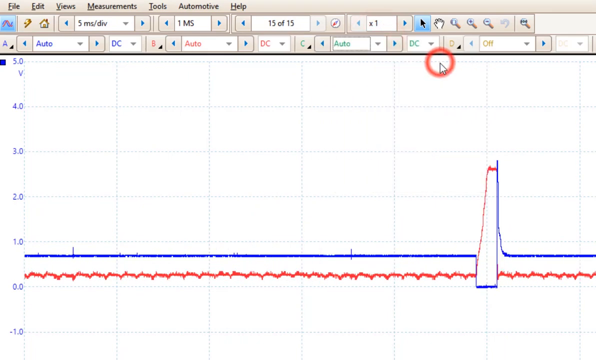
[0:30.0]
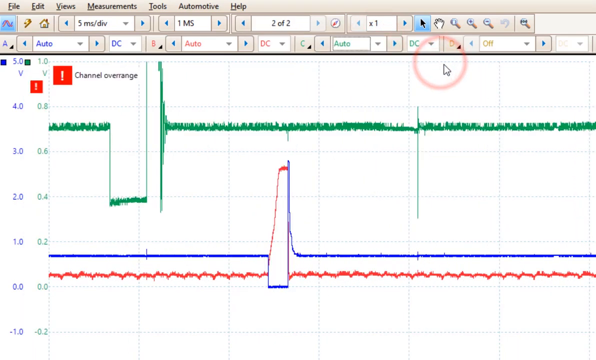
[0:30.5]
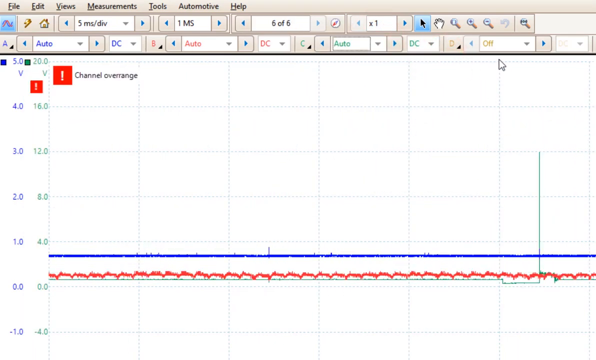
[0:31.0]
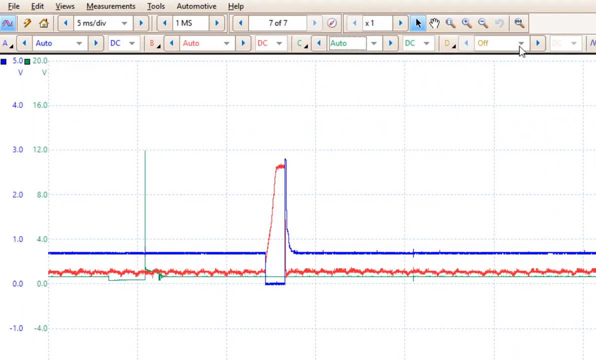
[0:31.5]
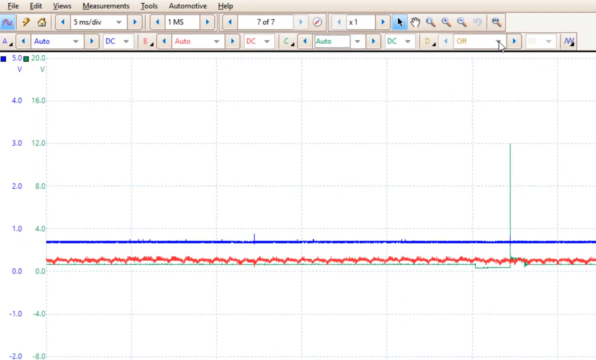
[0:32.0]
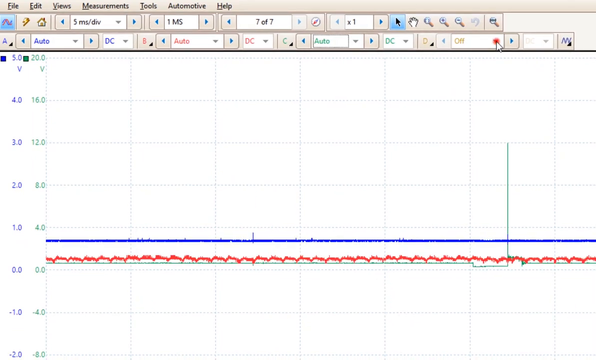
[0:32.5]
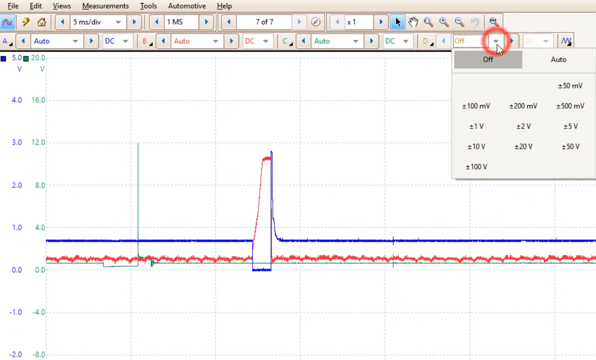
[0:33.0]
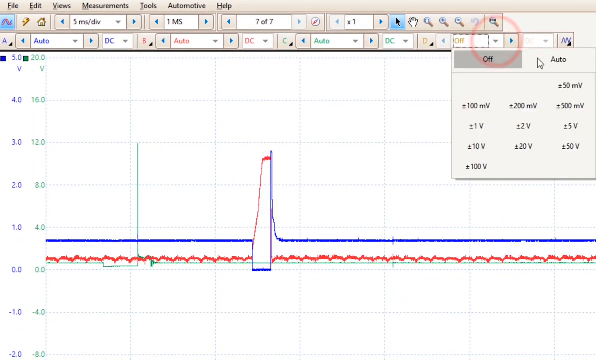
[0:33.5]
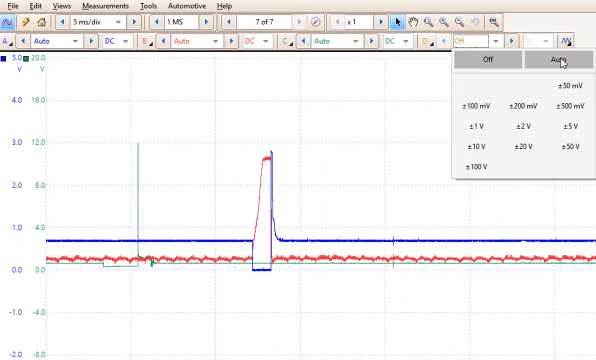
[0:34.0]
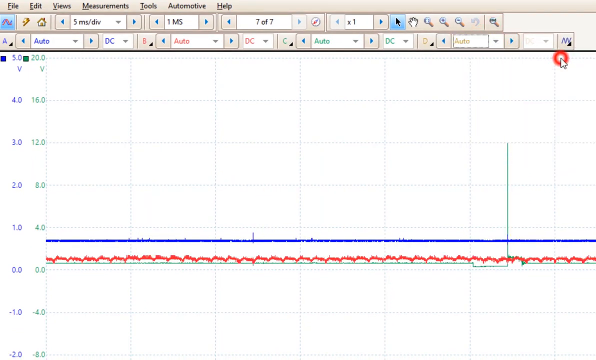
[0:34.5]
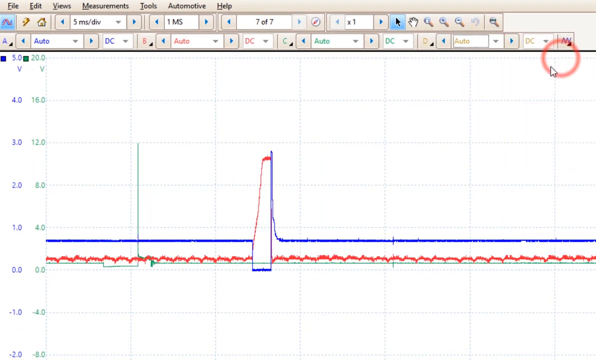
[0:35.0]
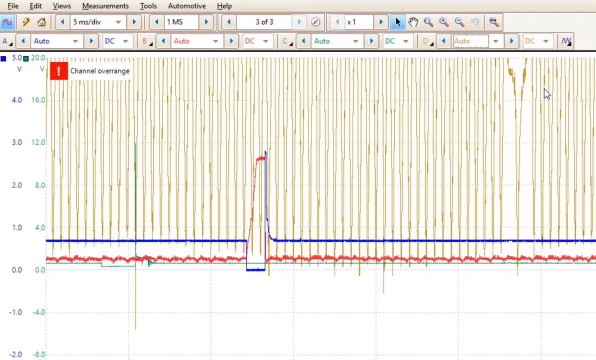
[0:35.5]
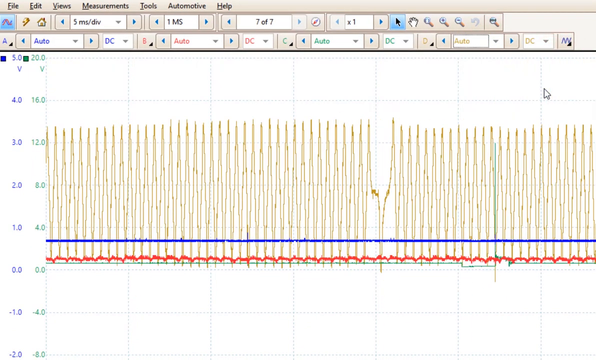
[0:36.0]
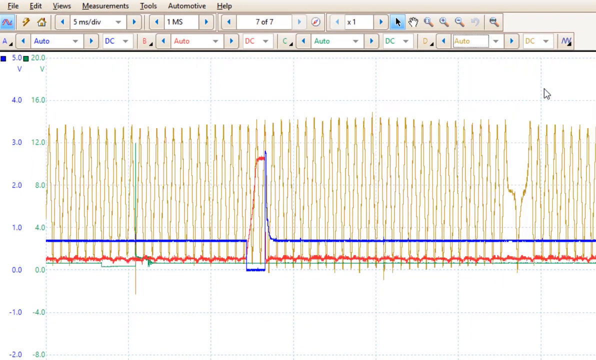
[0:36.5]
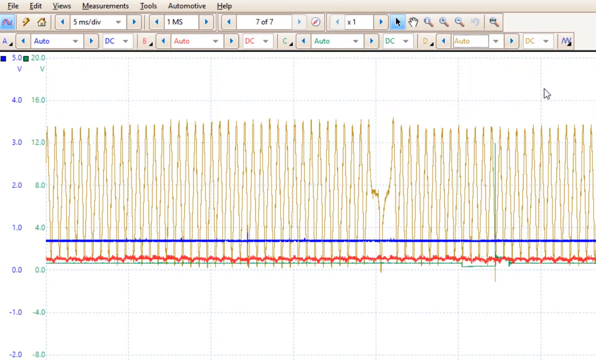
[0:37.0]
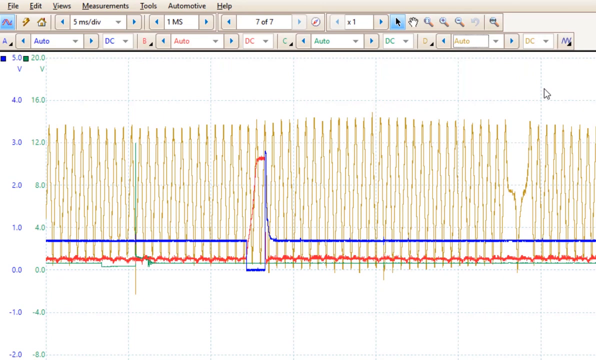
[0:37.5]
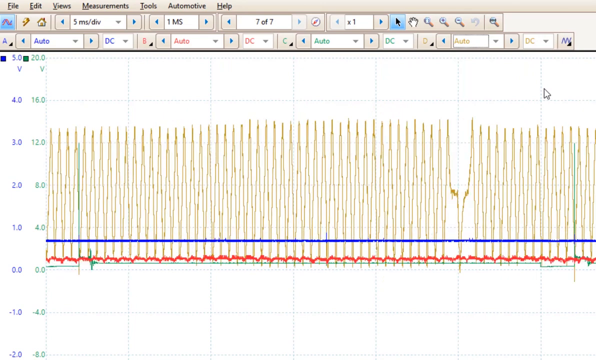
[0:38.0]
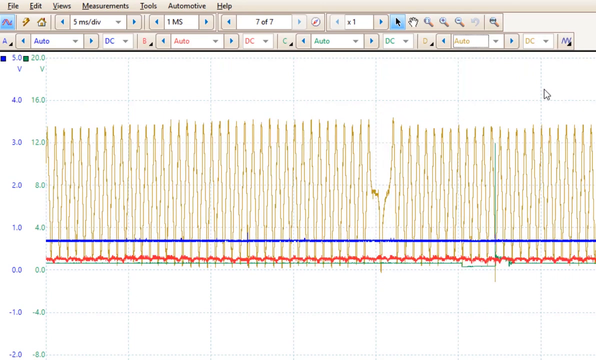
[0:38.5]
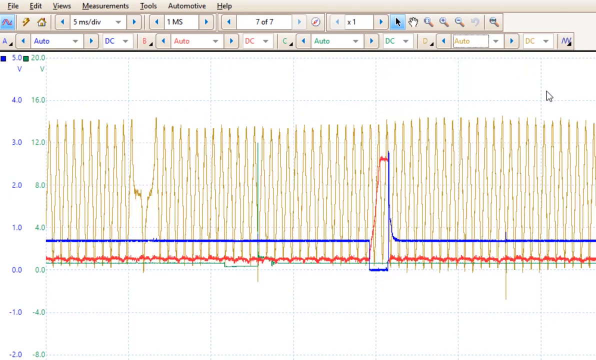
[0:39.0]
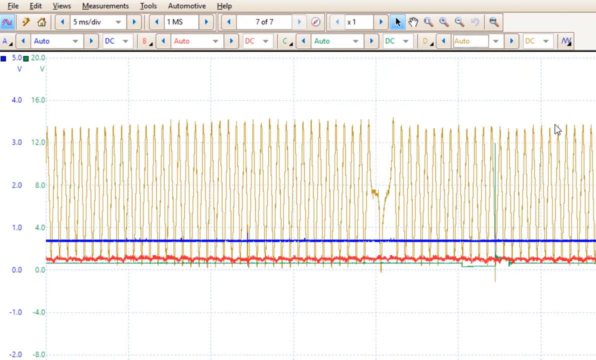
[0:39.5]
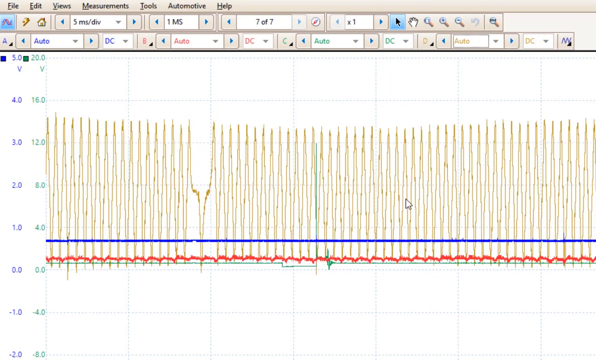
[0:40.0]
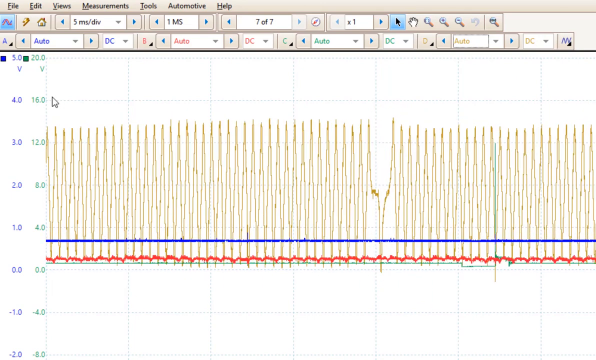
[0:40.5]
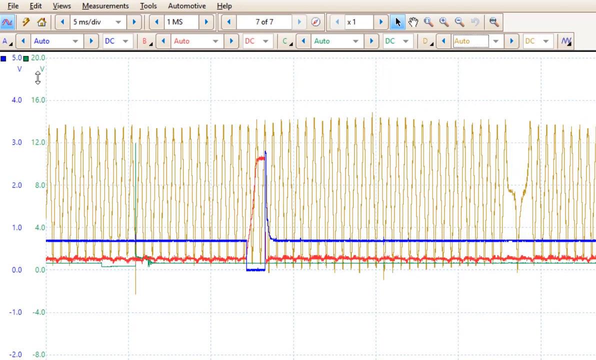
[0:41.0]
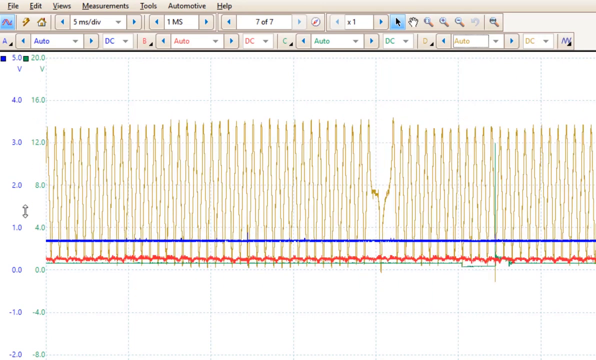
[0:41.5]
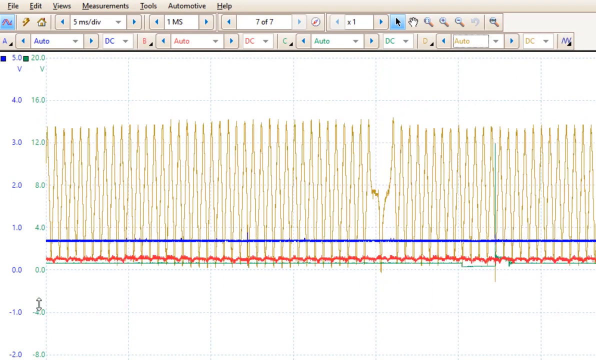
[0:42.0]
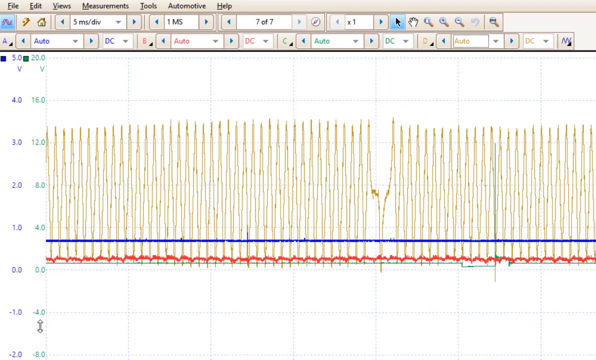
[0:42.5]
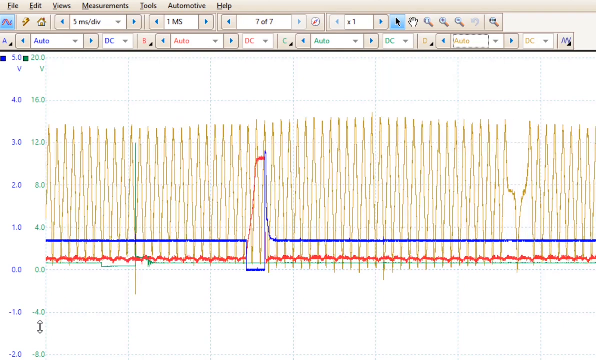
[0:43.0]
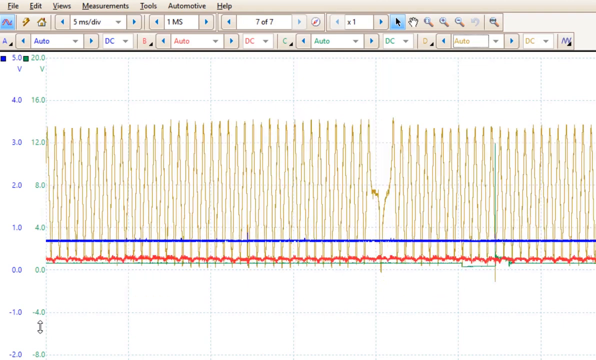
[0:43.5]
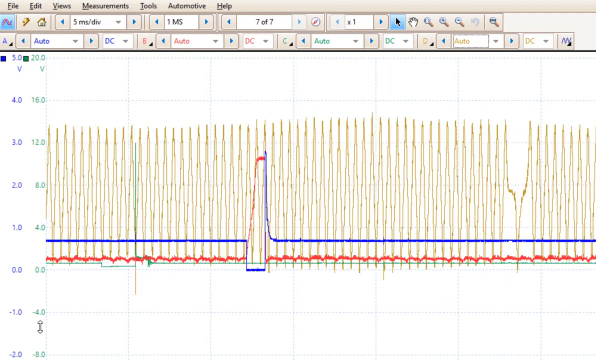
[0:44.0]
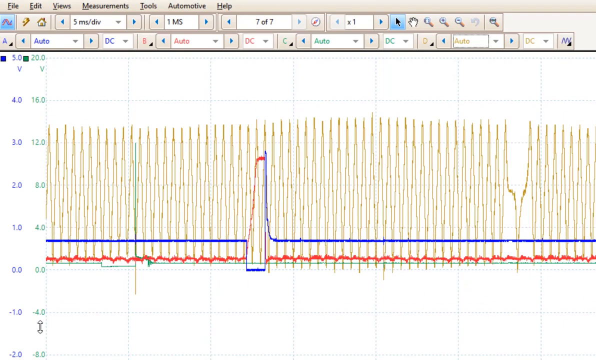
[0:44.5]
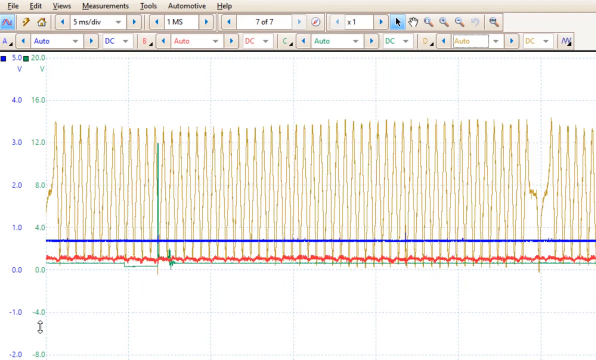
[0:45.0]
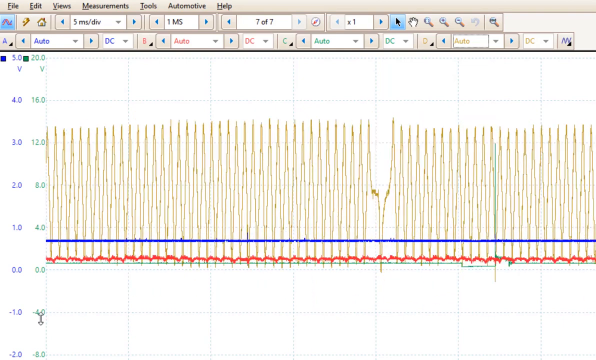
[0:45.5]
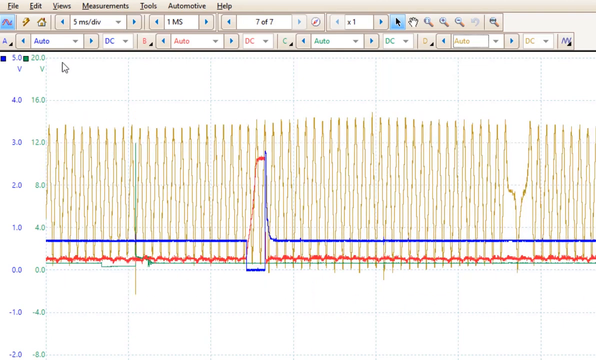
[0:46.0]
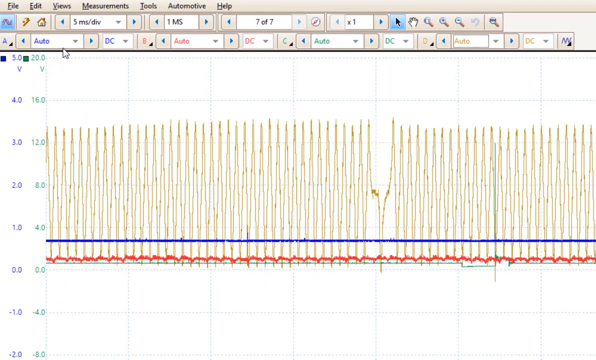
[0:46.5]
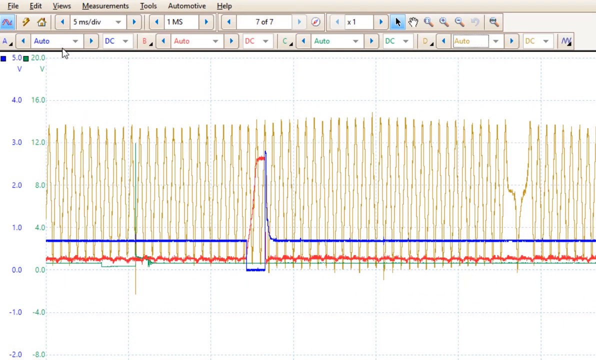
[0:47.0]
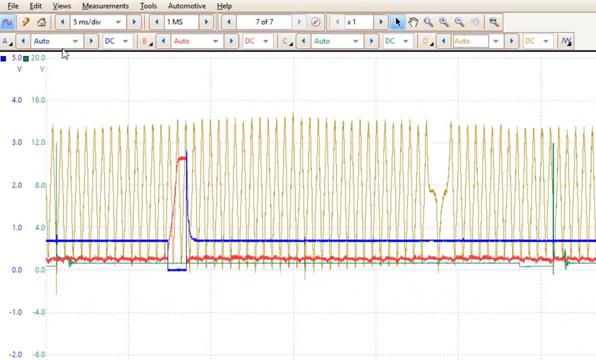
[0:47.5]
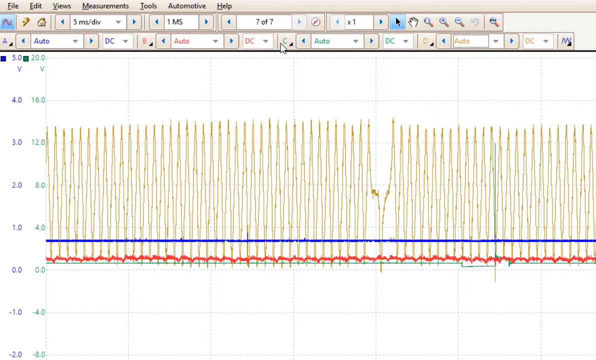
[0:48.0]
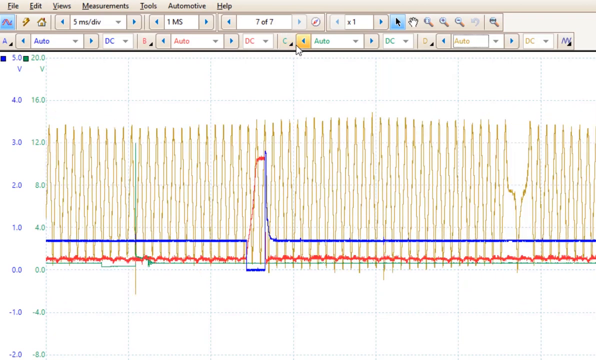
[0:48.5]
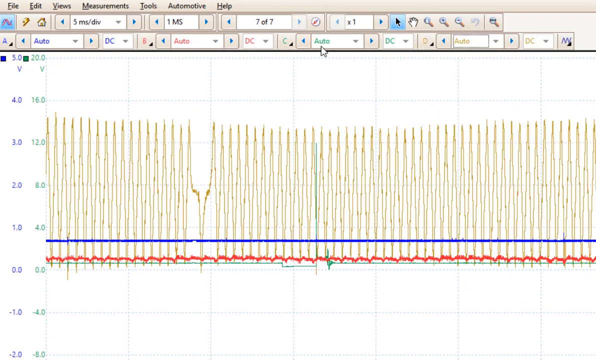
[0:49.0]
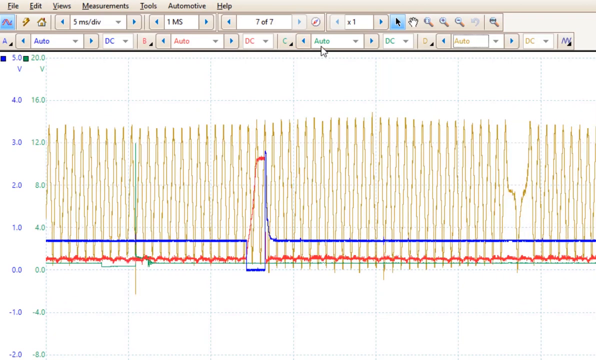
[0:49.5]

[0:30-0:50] The user goes on to the C tab and the D tab, which the user puts on auto. The chart changes and adds lines that correspond to the colors of the letters. The yellow line, which corresponds to D, is very aggressive and active compared to the rest, while the other lines seem very calm and light. A is associated with blue and B with red. Toward the end of the scene, the user turns off the yellow line, which is letter D.